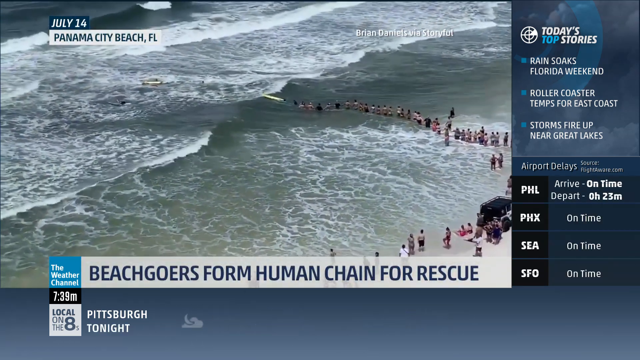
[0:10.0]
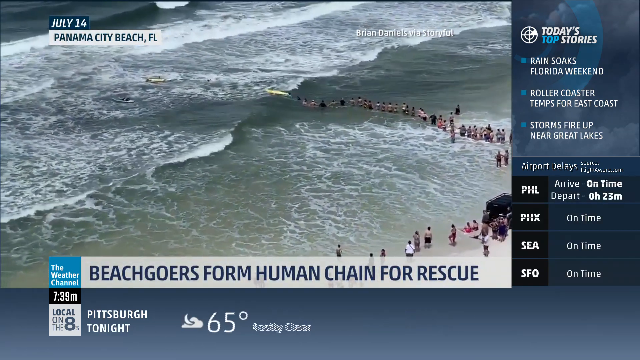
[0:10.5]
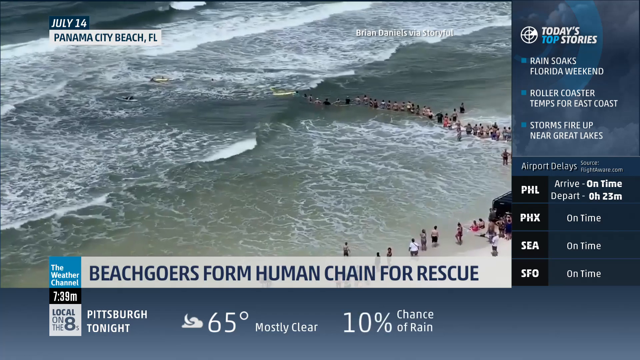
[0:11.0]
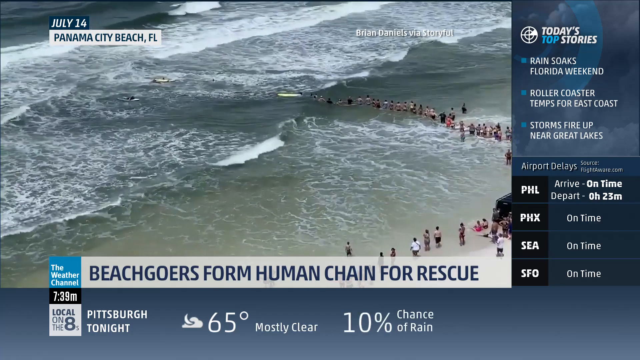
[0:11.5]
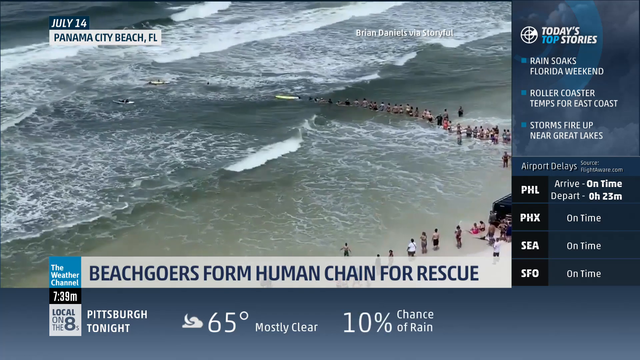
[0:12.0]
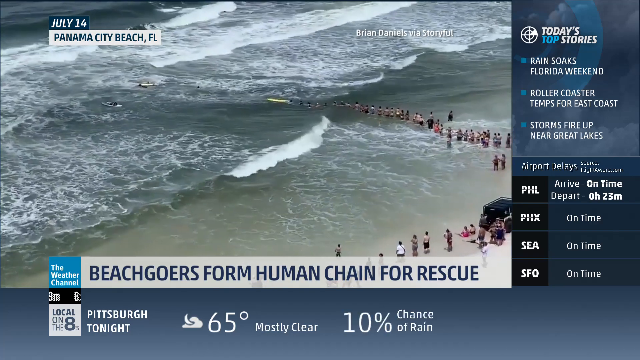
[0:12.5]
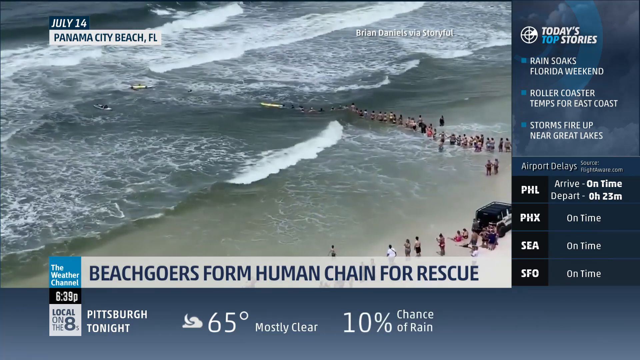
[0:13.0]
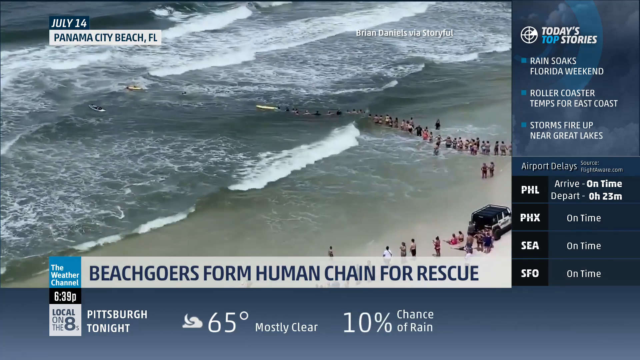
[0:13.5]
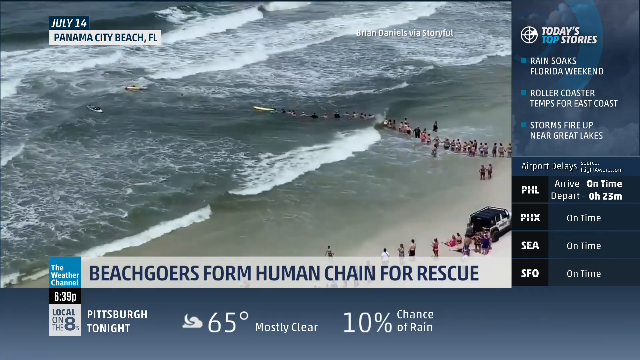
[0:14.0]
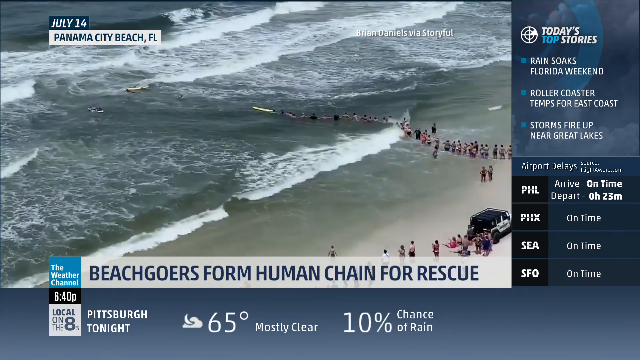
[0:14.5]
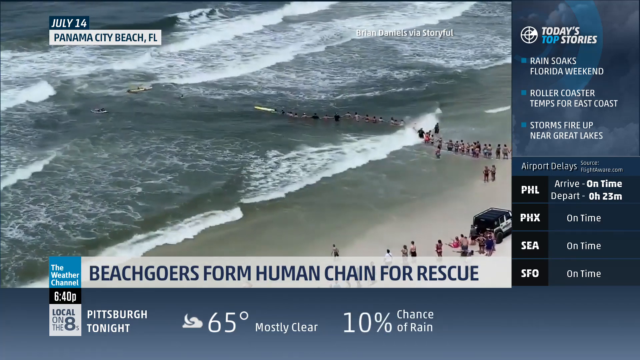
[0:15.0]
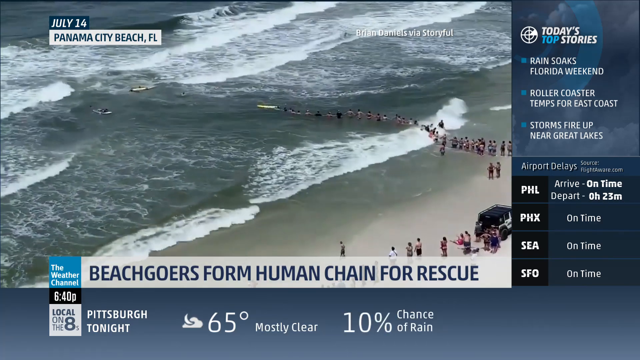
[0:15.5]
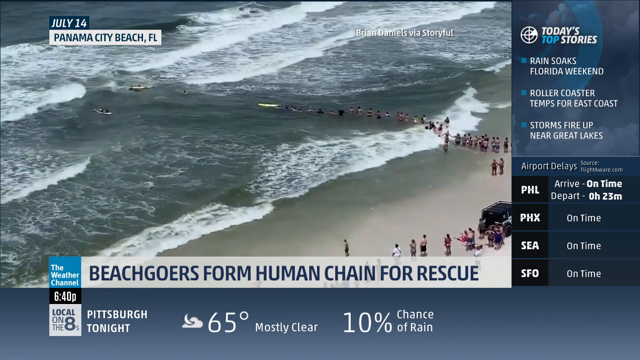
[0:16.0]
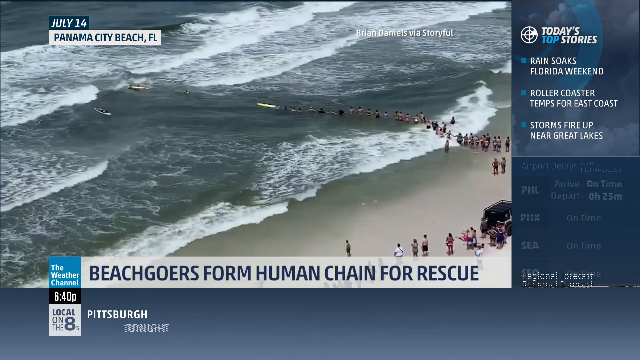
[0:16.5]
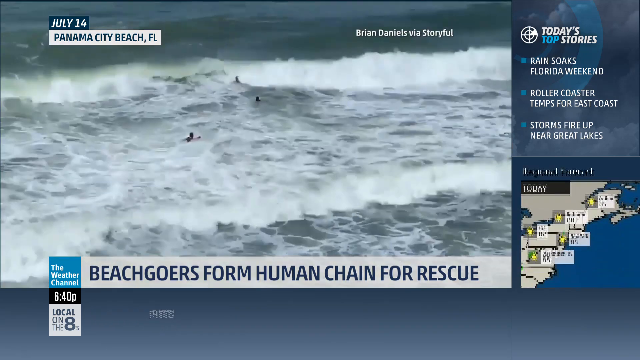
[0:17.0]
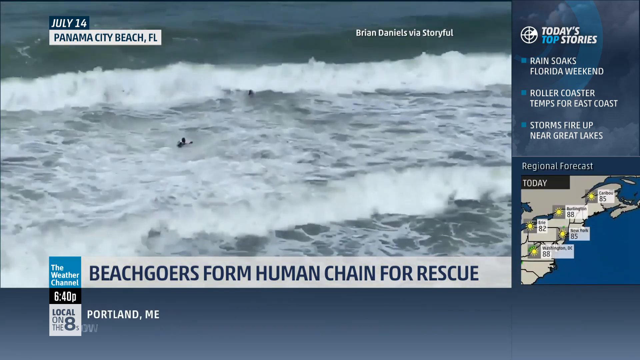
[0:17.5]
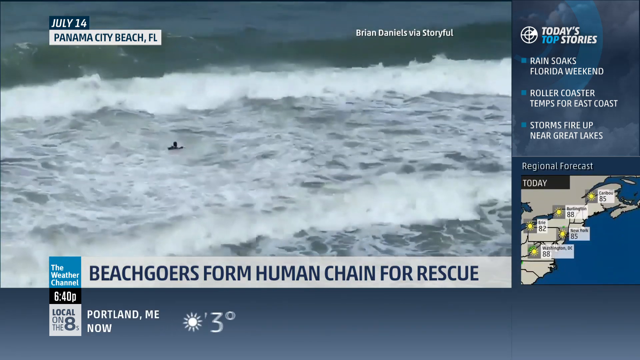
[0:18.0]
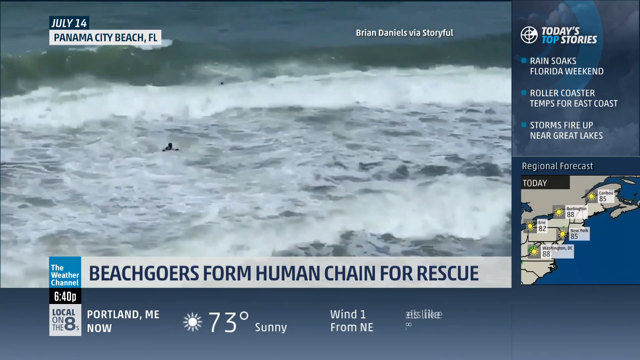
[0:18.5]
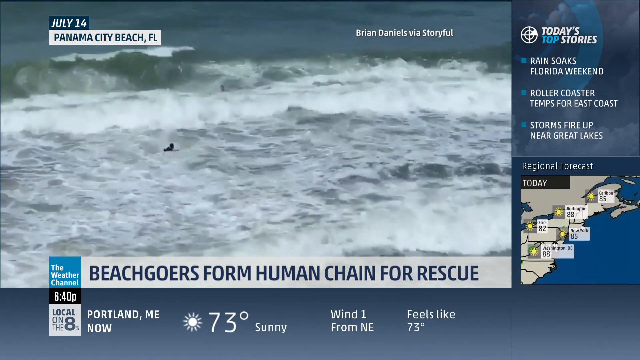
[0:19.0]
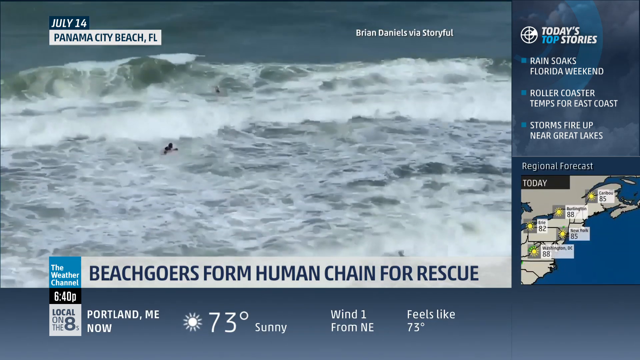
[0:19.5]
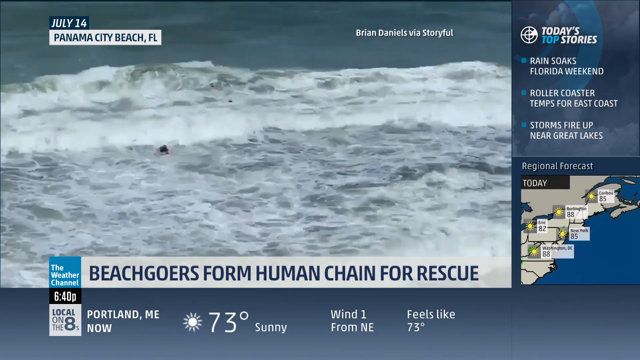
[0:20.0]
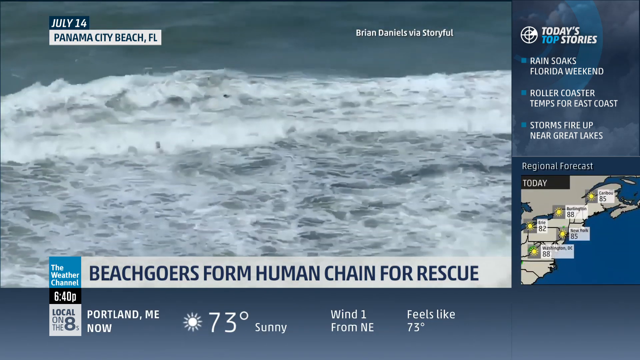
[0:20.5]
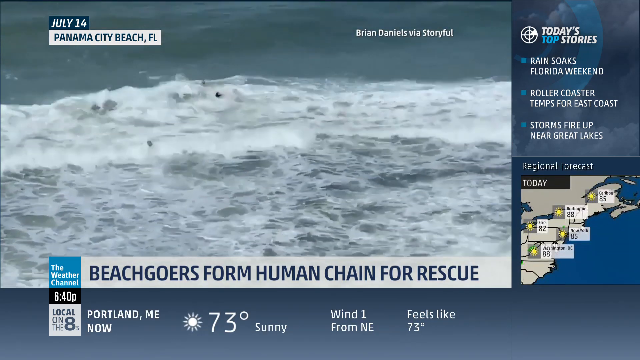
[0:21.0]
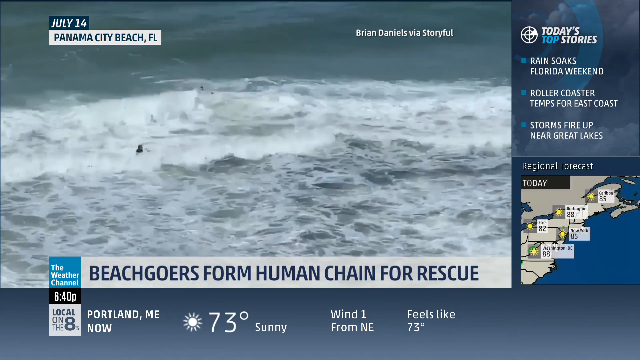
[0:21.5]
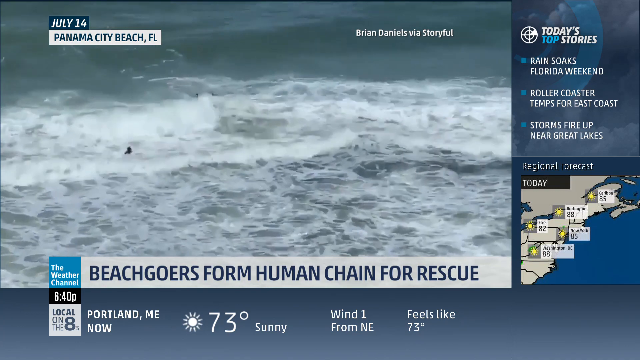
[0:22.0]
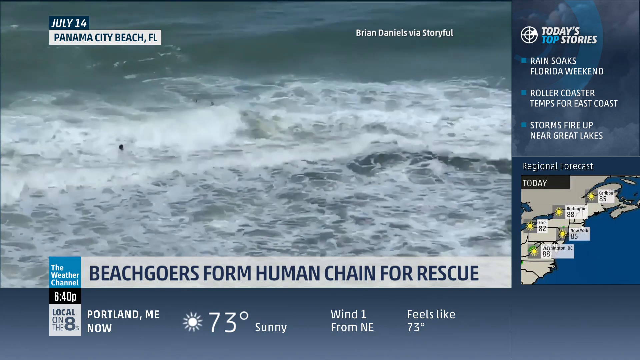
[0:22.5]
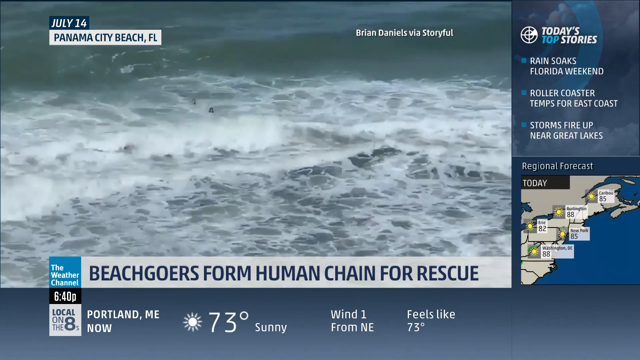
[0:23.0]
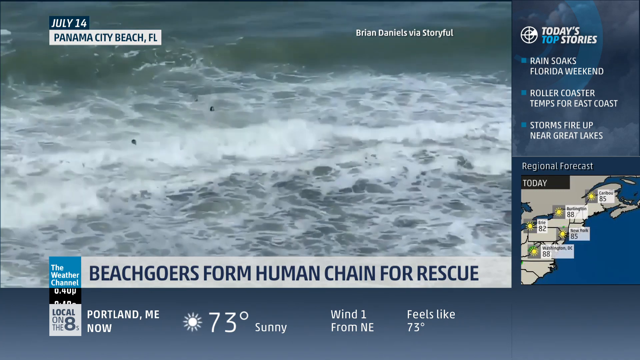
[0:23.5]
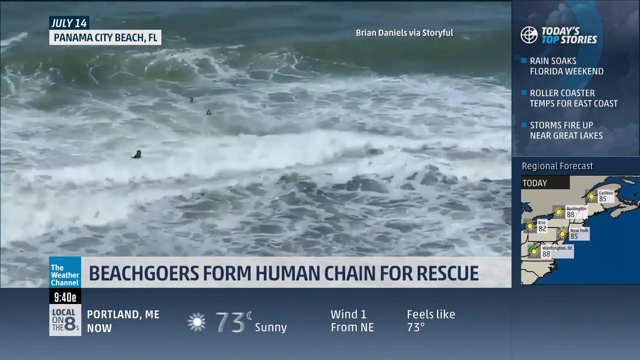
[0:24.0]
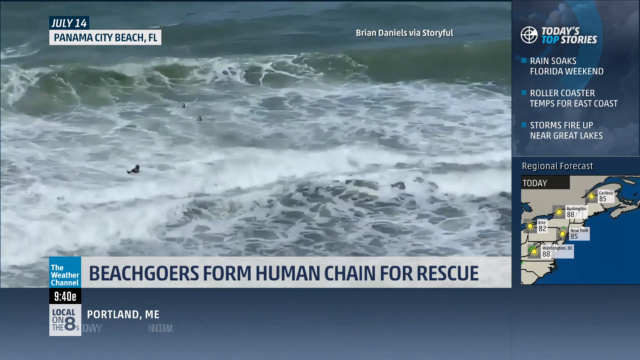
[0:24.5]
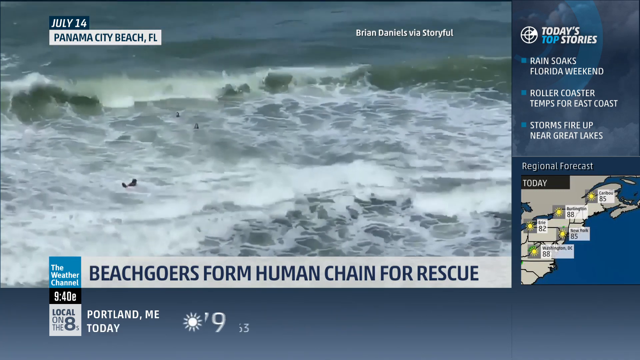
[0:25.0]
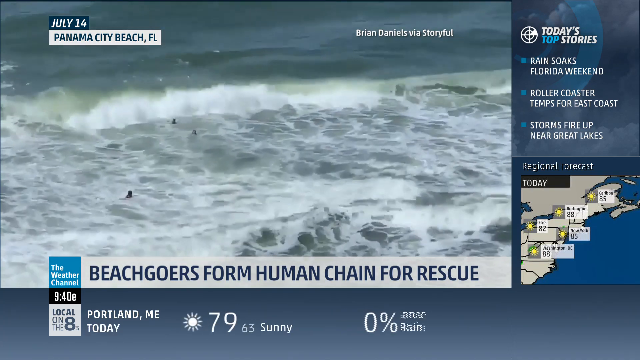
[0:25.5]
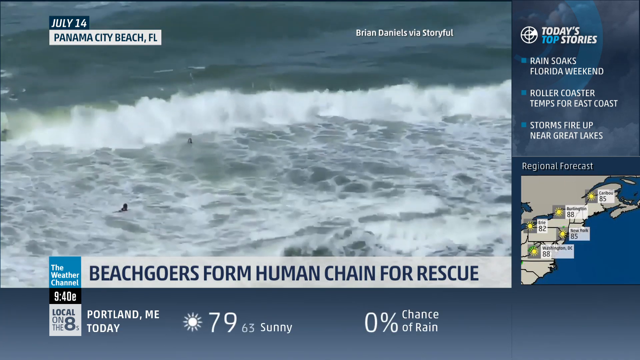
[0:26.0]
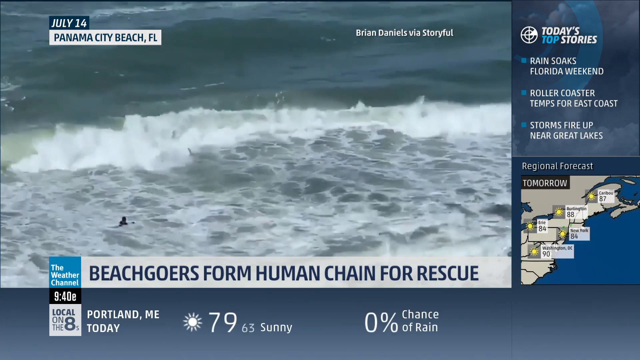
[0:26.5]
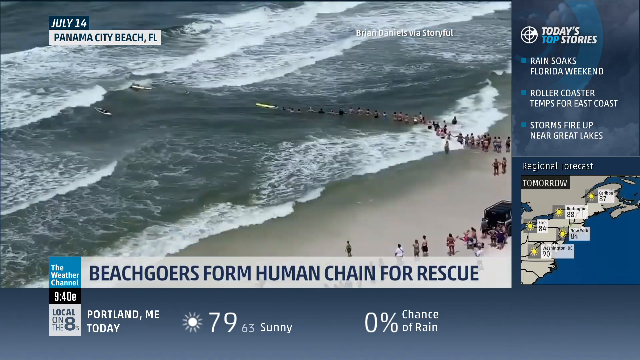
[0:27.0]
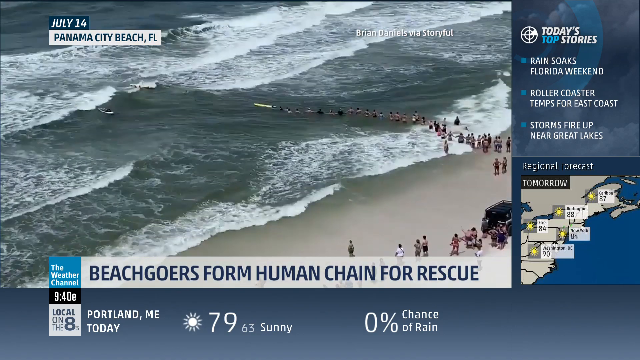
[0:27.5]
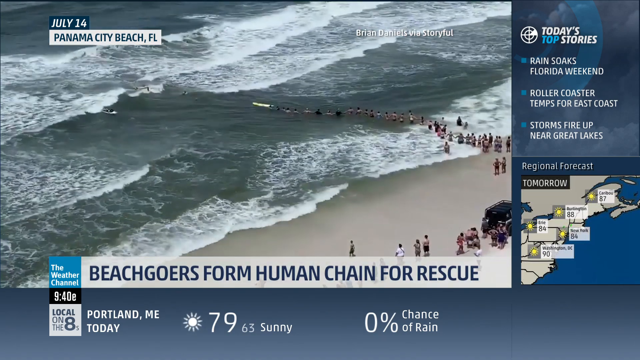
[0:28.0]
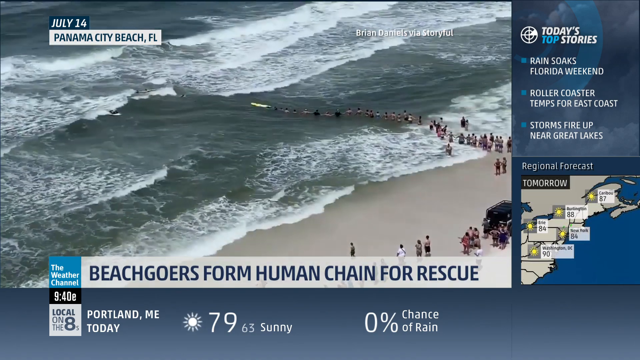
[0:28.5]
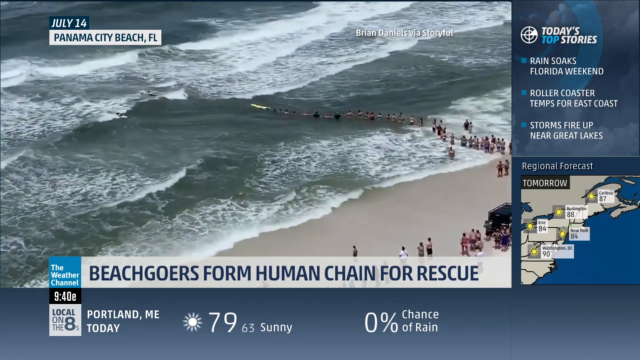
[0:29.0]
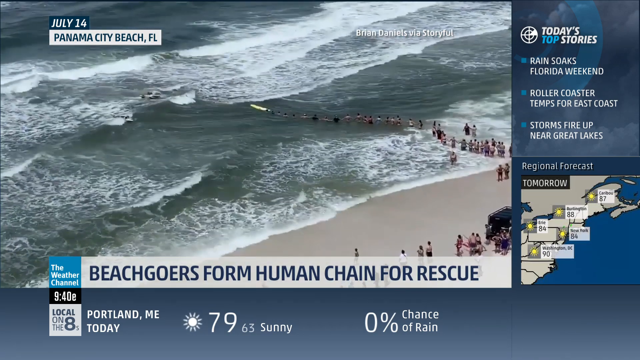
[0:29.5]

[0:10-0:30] The Weather Channel piece is titled "Beachgoers form human chain for rescue" and shows Panama City Beach, Florida, on July 14th. People form a chain into the water as strong waves come in, trying to reach what look like people out there who need assistance. A bunch of people on the beach watch what is going on. The footage is credited to Brian Daniels via Storyful. At the bottom a weather forecast reads "Pittsburgh tonight, 65 degrees, mostly clear, 10% chance of rain." In the upper right corner the text reads "today's top stories": "Rain soaks Florida weekend," "Rollercoaster temps for East Coast," and "storms fire up near Great Lakes." During the rescue, very strong waves, or possibly storm surge, batter the beach. An estimated 40 to 50 people take part in the rescue attempt.